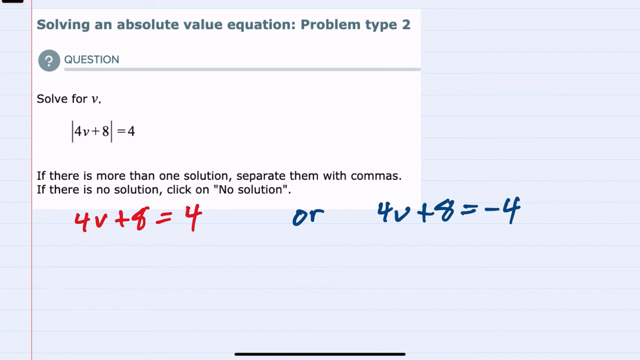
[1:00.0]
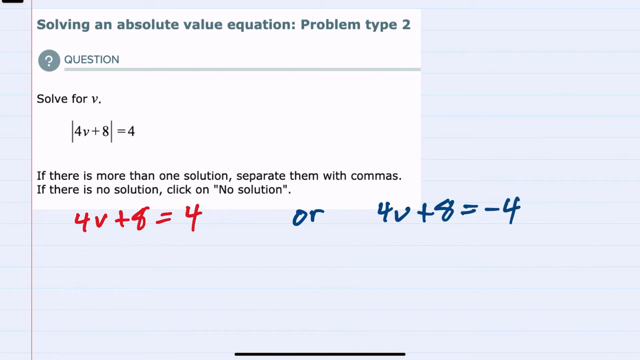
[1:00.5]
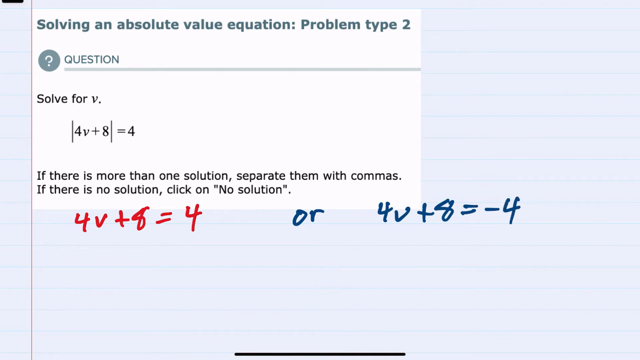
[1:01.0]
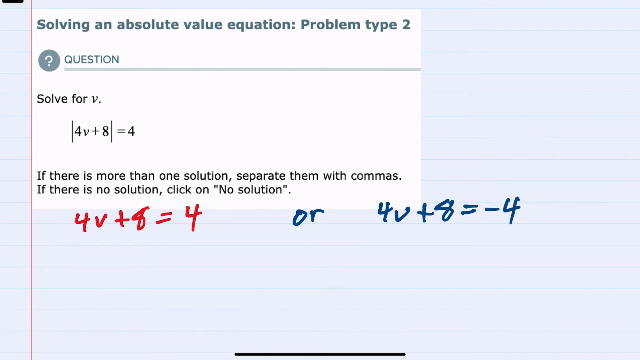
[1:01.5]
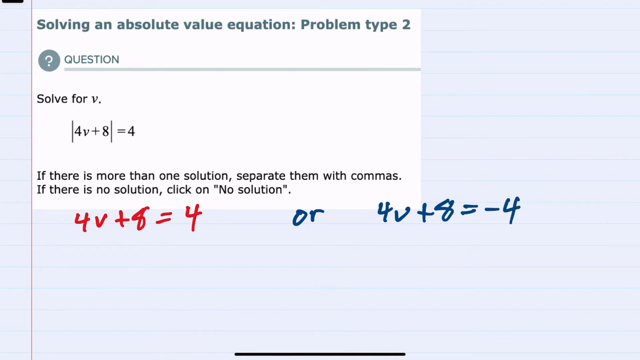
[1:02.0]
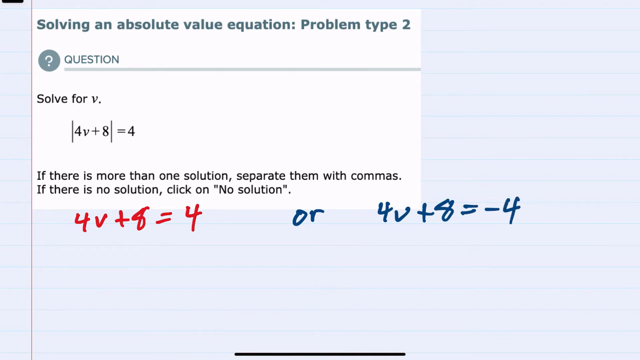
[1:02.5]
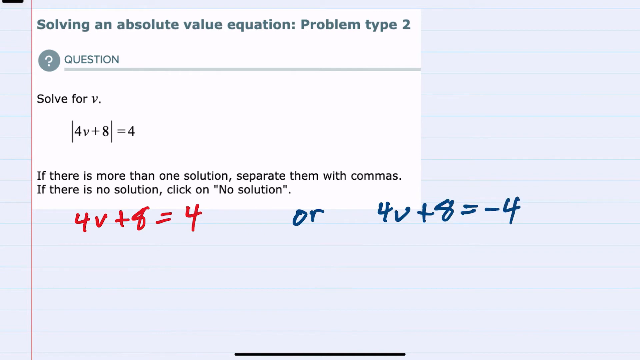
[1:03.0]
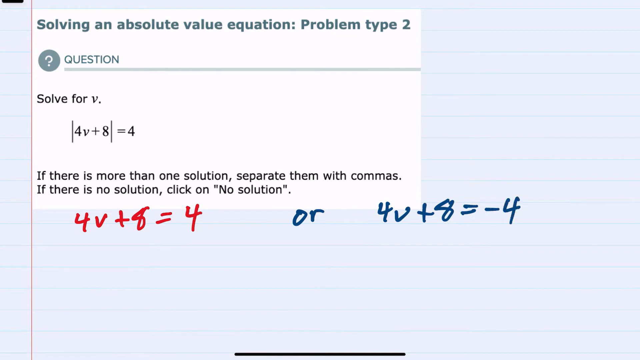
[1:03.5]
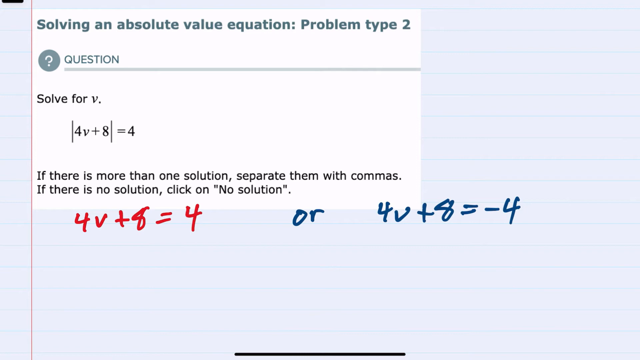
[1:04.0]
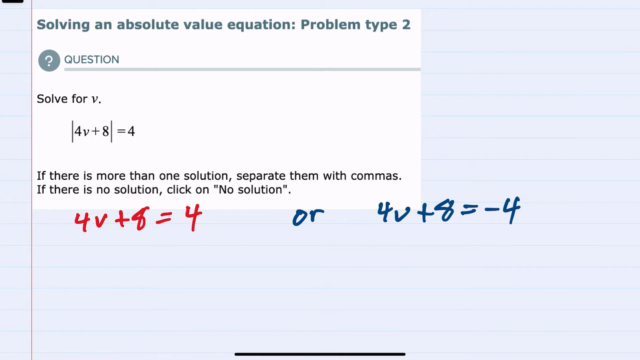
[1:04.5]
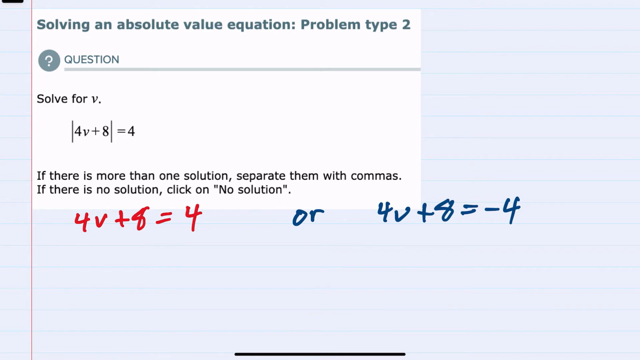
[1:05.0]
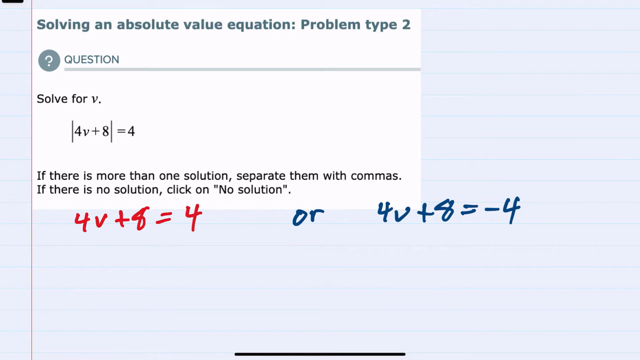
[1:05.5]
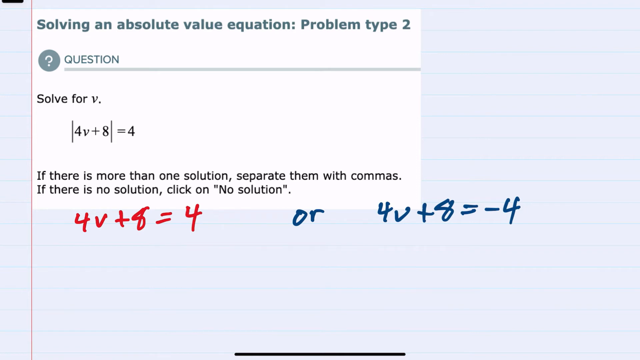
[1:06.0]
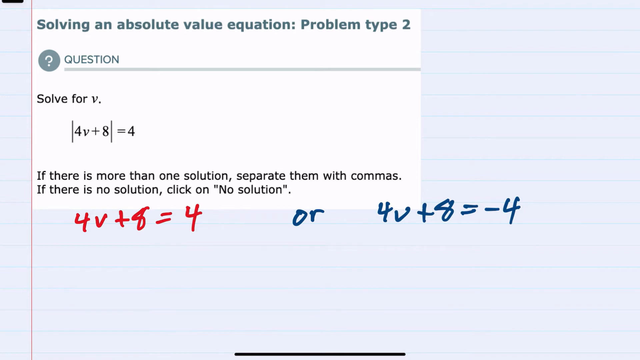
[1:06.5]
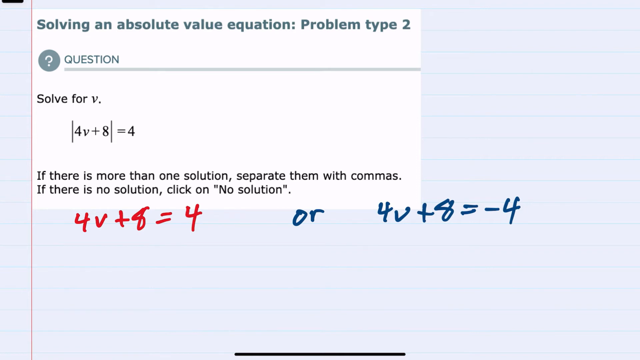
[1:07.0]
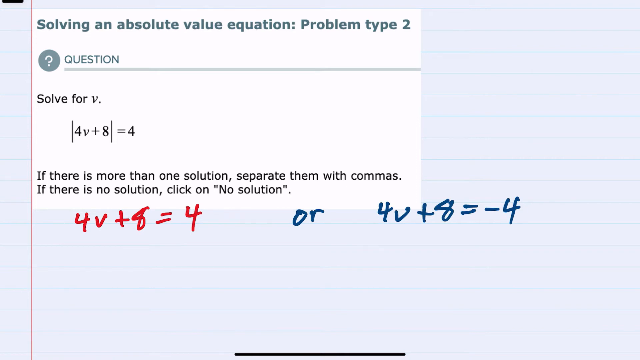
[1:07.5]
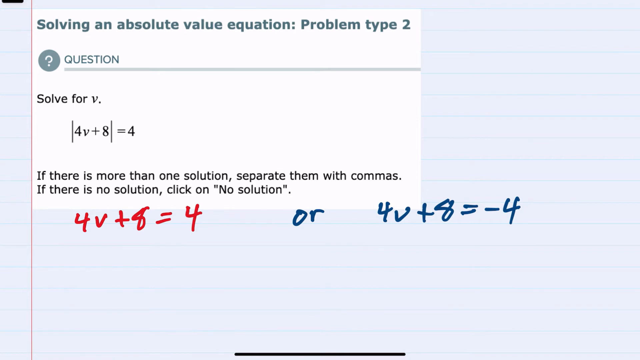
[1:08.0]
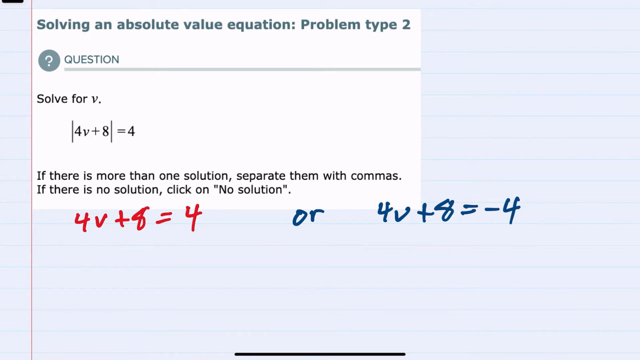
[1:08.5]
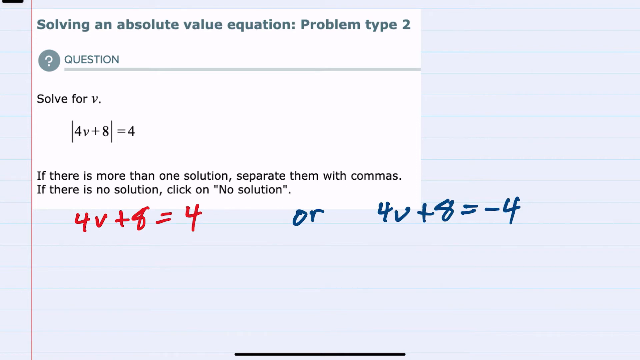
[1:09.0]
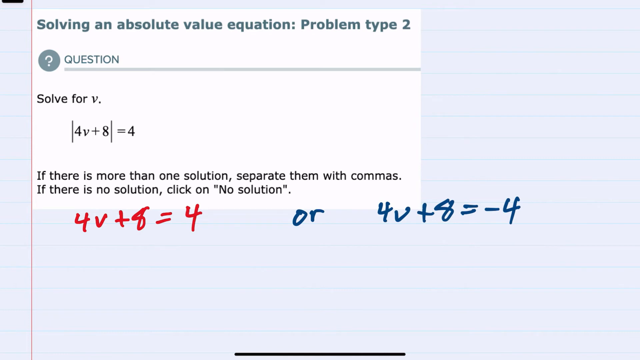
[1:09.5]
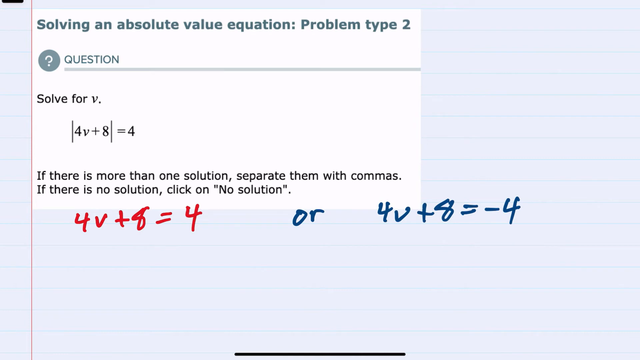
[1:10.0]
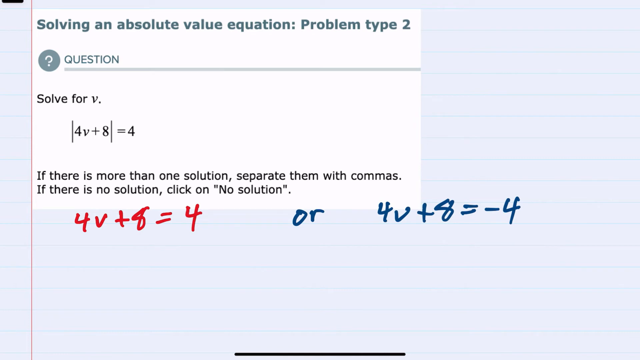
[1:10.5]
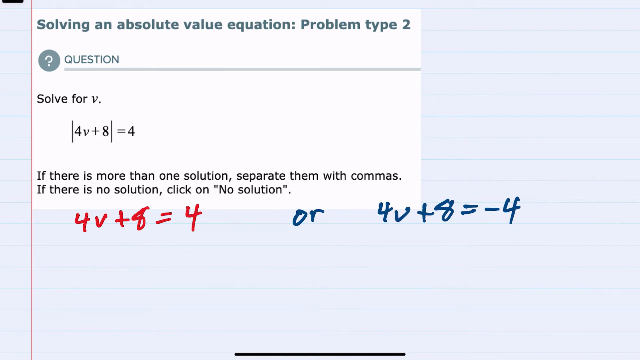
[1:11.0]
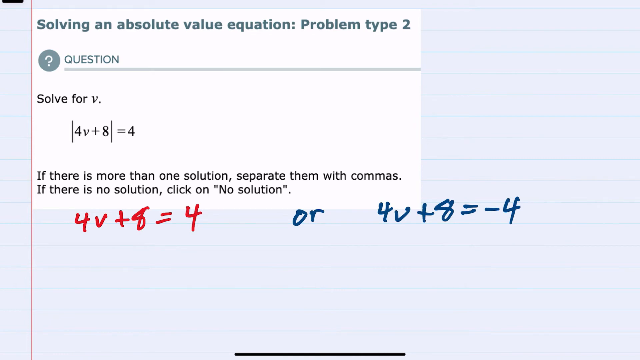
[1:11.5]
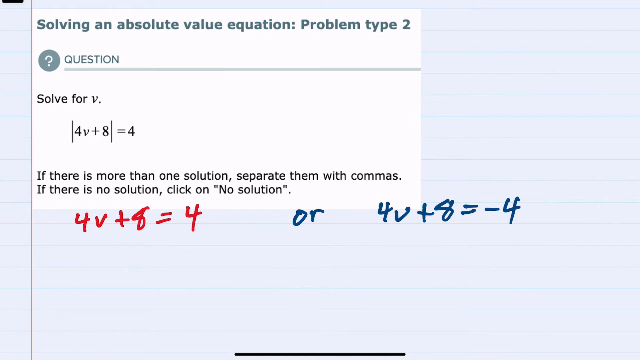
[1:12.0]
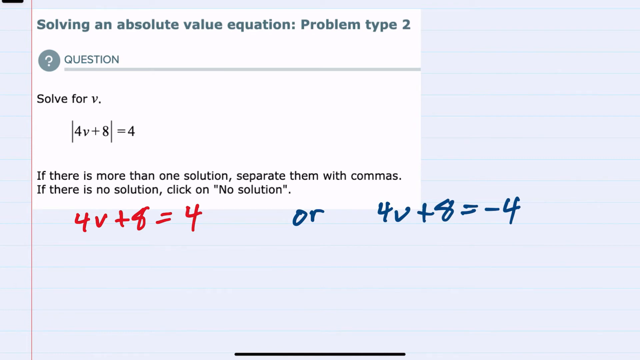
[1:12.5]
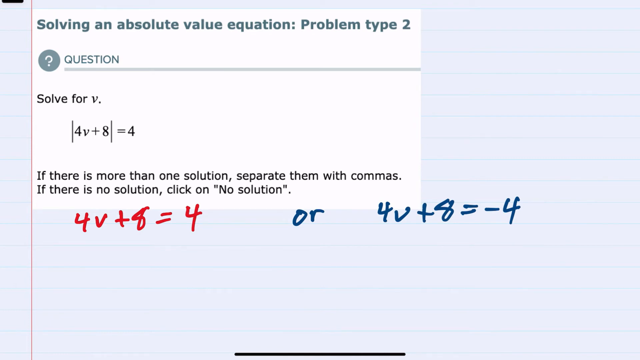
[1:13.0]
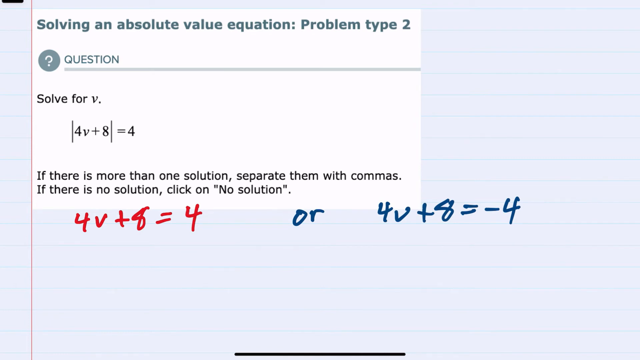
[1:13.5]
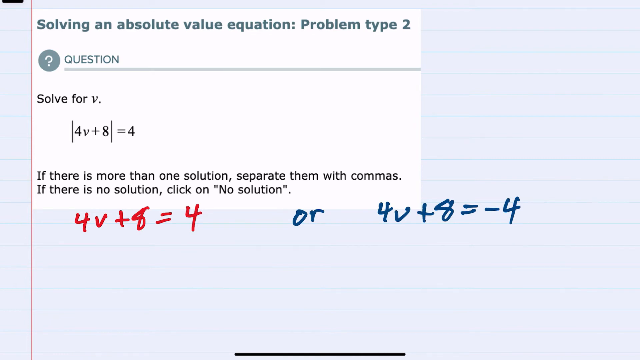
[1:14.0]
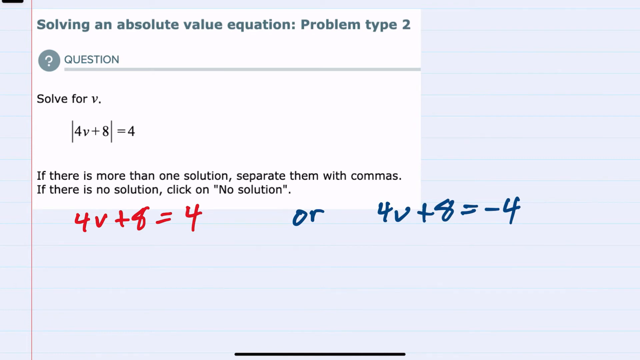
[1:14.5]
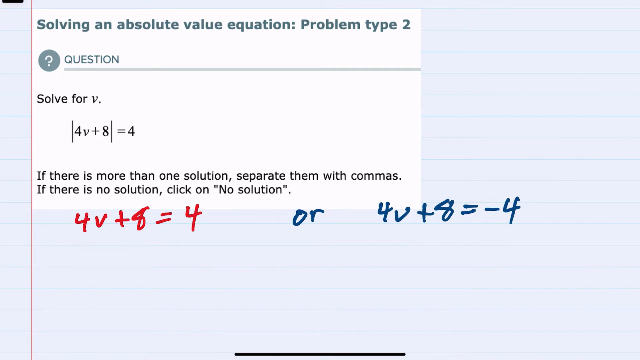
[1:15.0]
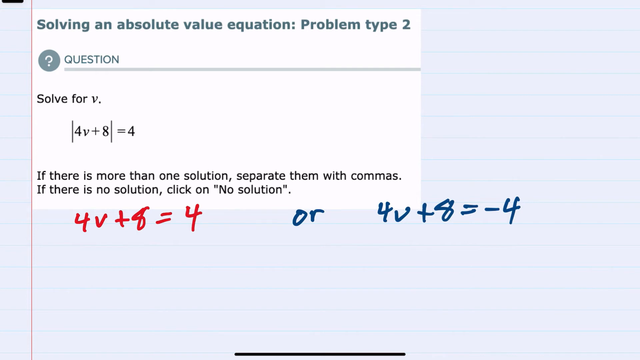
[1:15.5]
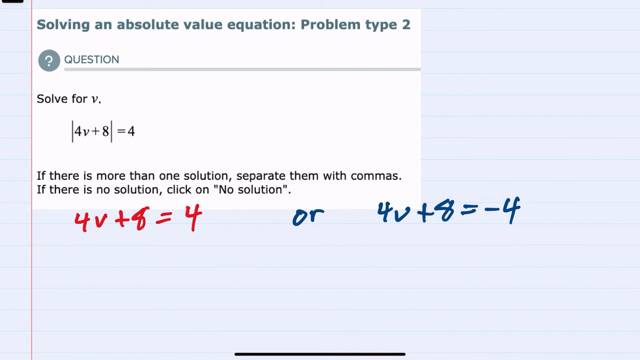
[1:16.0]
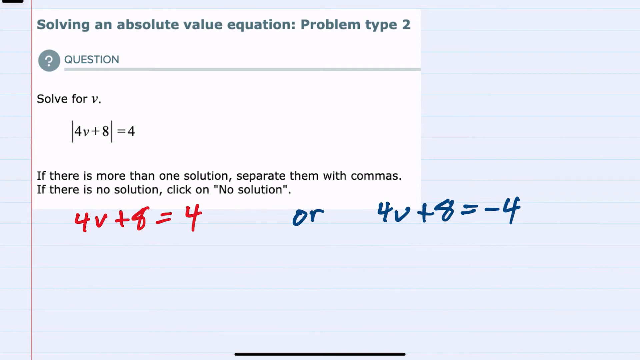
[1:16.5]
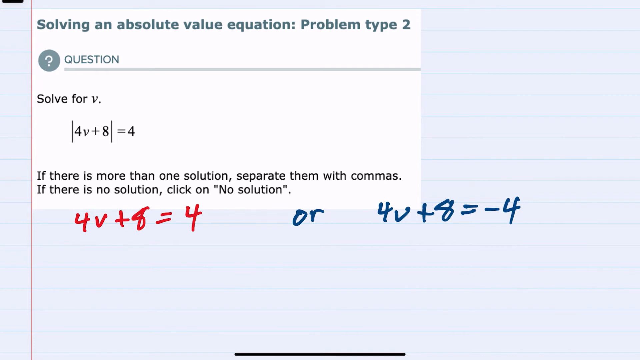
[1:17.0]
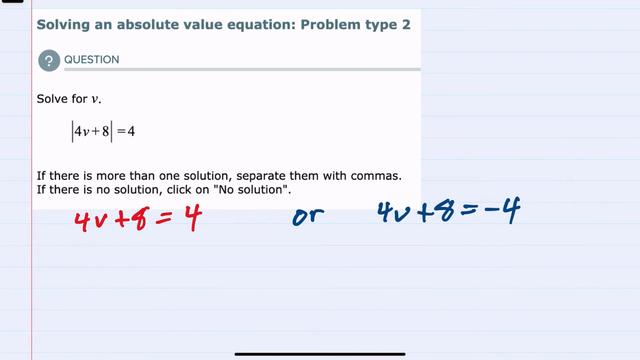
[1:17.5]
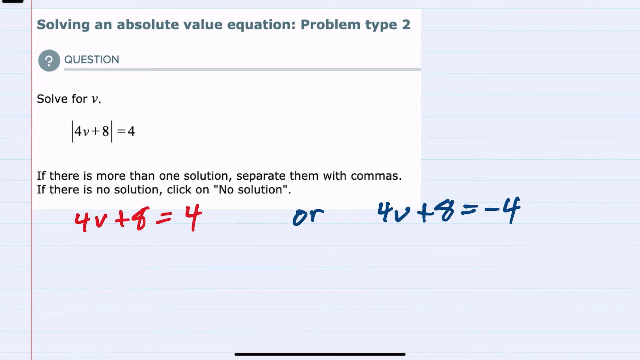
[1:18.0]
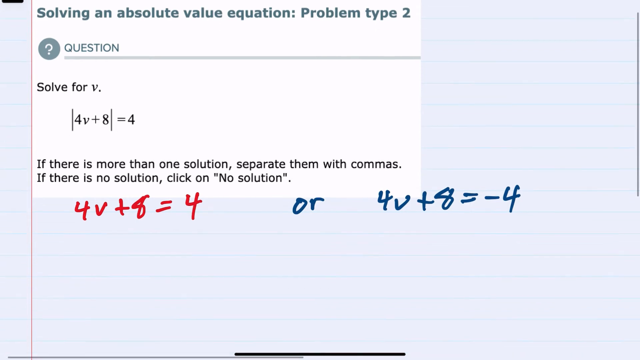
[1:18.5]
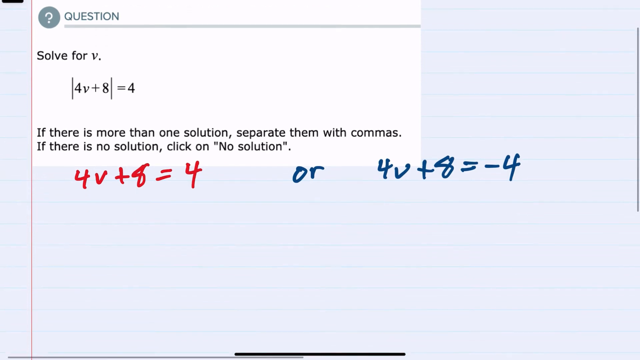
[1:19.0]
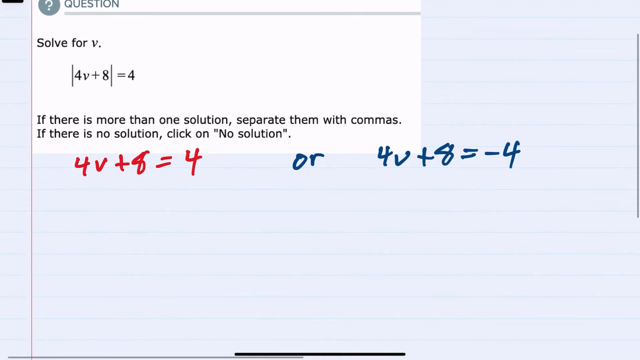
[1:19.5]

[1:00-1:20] The image is a piece of lined paper with an overlay reading "solving an absolute value equation problem type 2", with the question icon, the word "question" and "solve for v"; the problem is "4v + 8 = 4". The instructions read "if there is more than one solution separate them with commas if there is no solution click on no solution". Underneath, "4v + 8 = 4", the same as the question, "or 4v + 8 = -4" is already written.